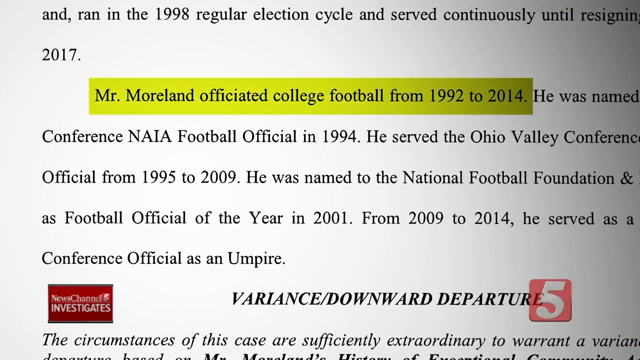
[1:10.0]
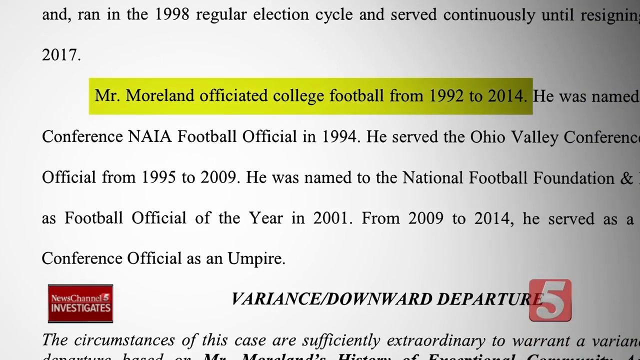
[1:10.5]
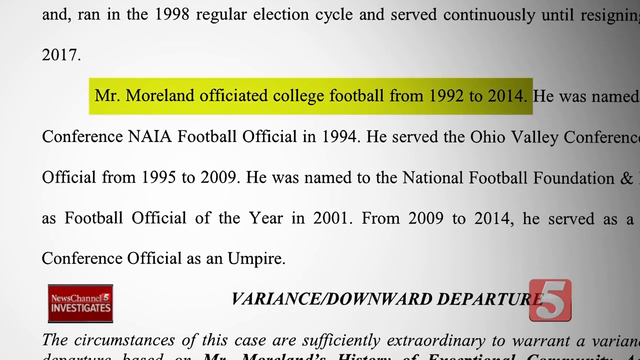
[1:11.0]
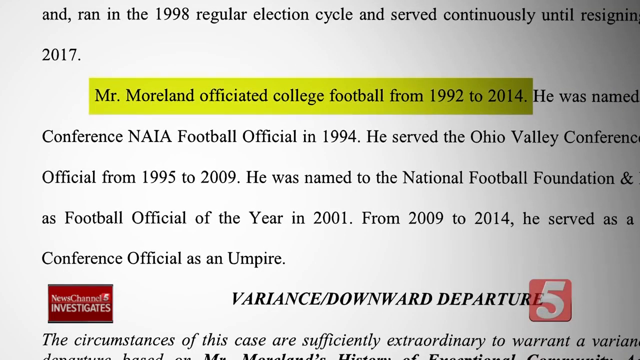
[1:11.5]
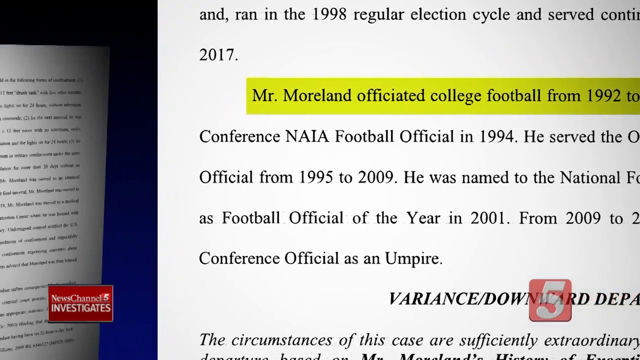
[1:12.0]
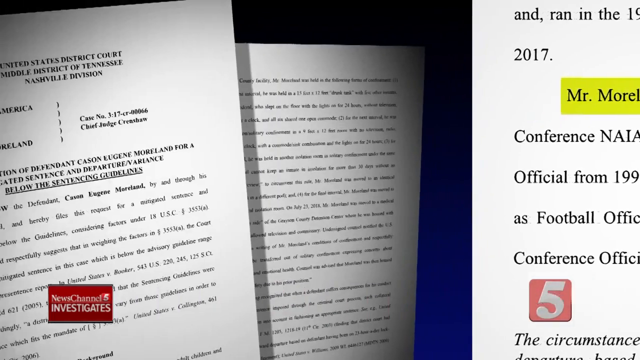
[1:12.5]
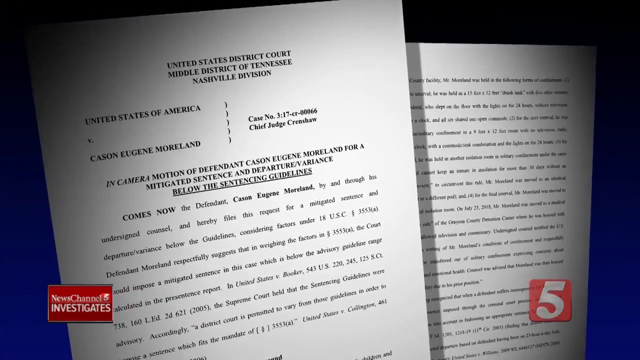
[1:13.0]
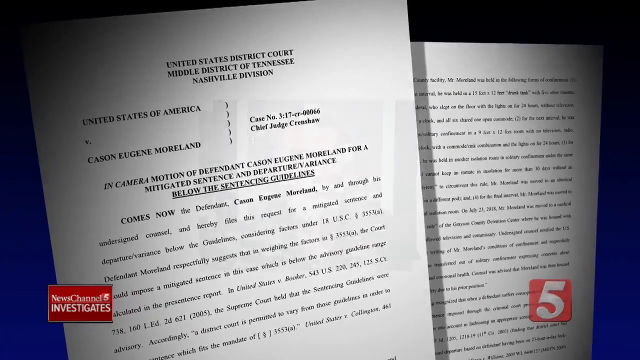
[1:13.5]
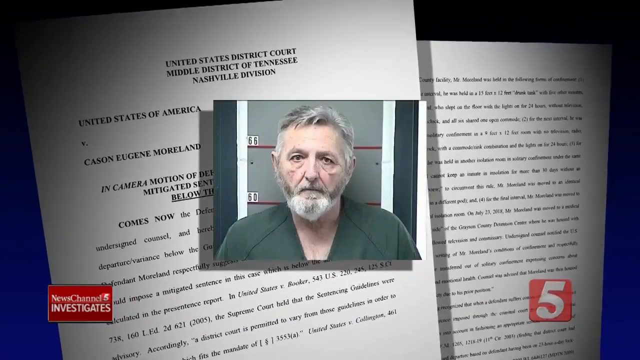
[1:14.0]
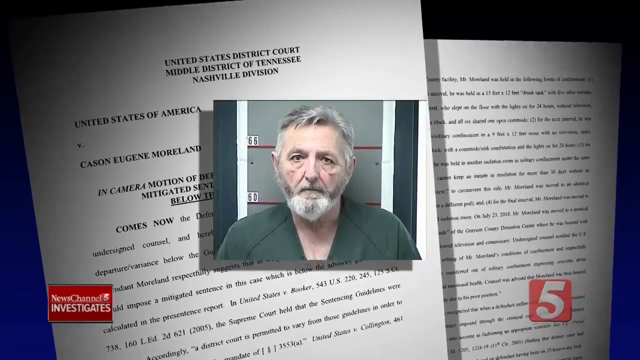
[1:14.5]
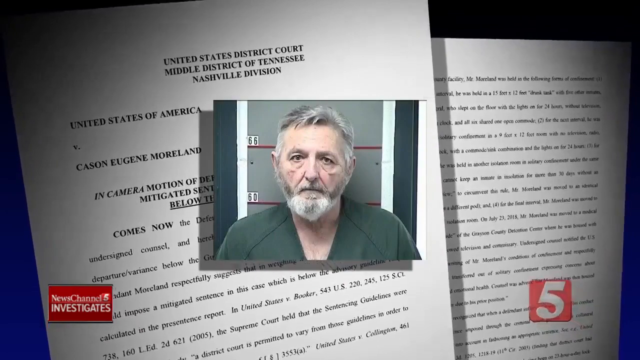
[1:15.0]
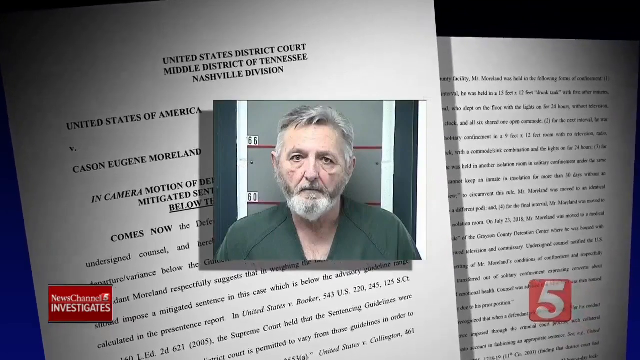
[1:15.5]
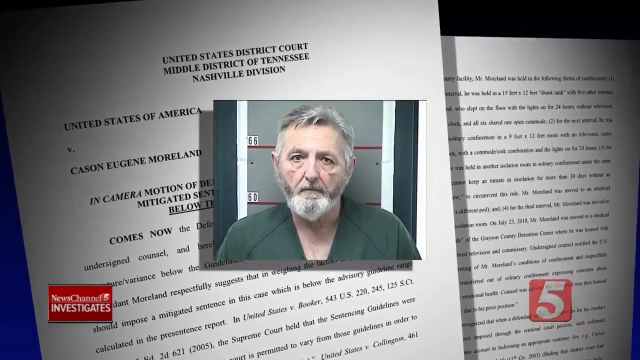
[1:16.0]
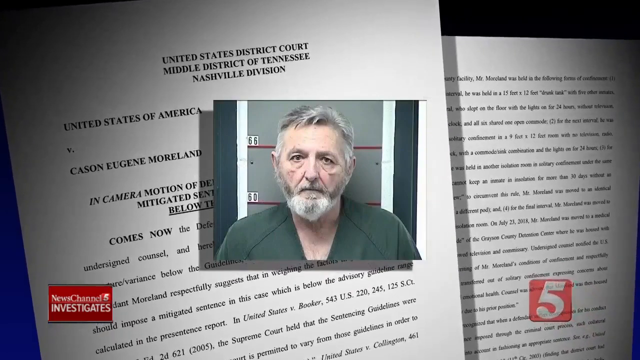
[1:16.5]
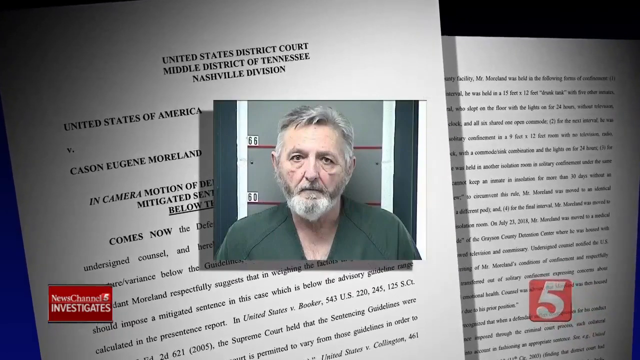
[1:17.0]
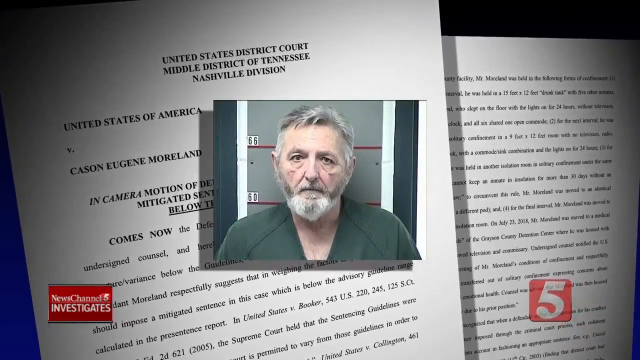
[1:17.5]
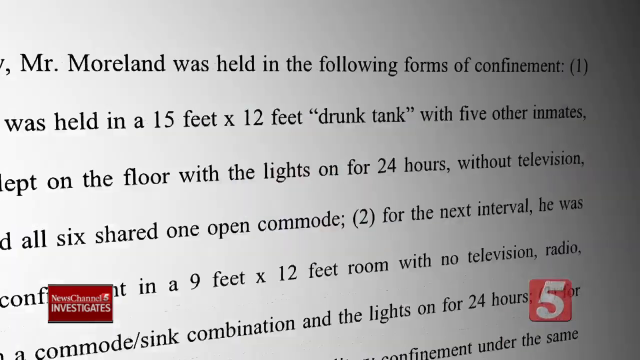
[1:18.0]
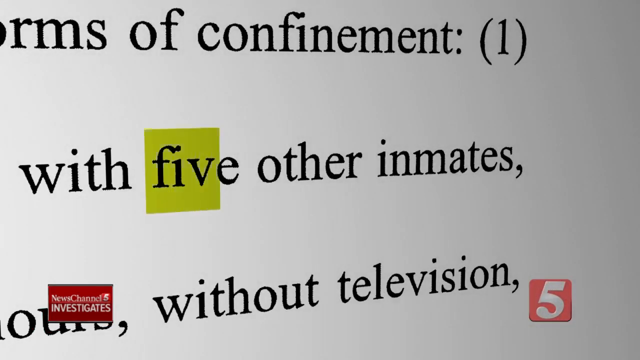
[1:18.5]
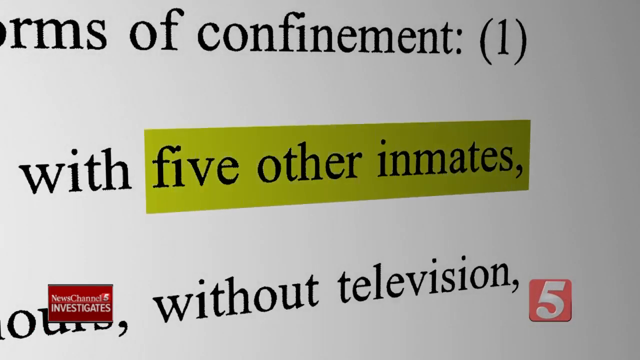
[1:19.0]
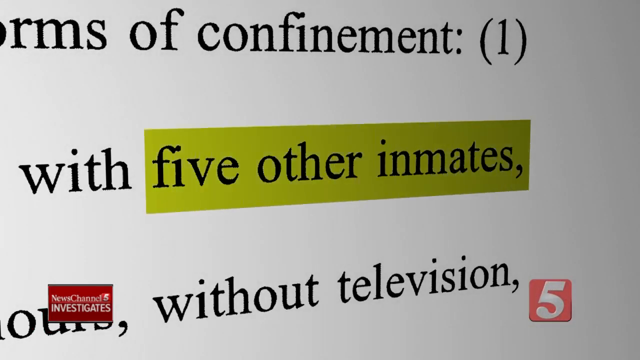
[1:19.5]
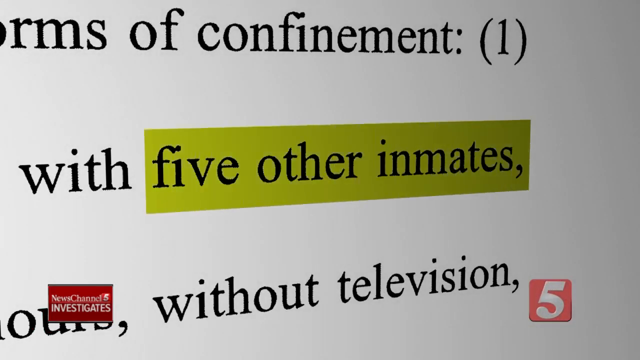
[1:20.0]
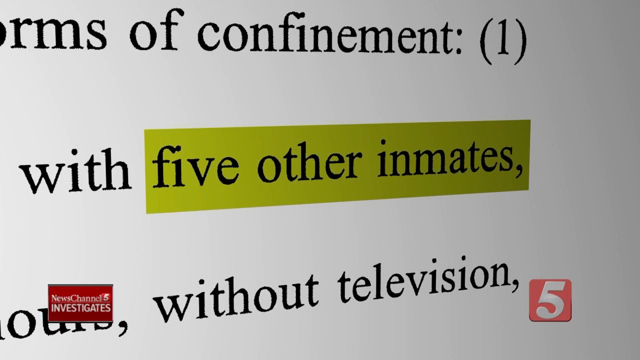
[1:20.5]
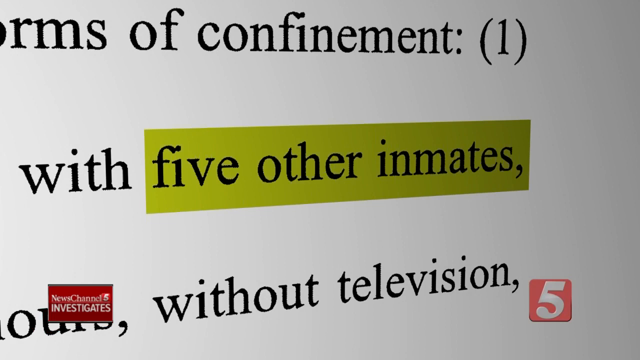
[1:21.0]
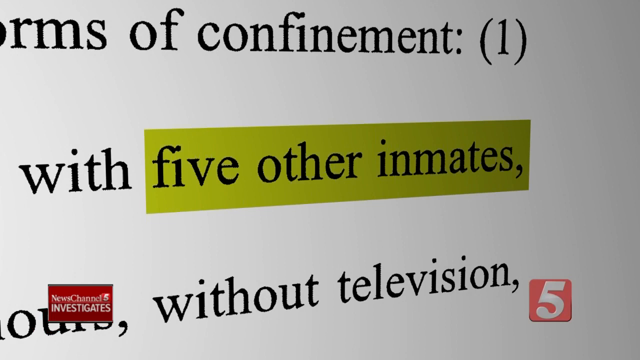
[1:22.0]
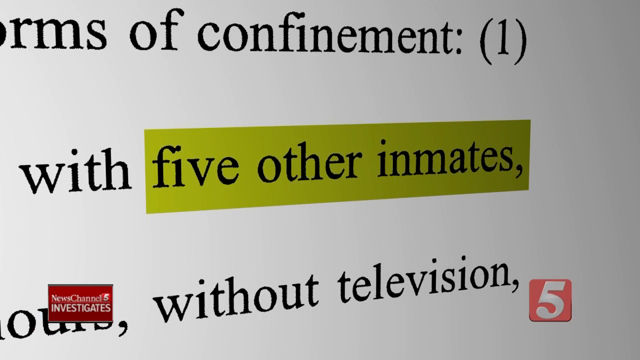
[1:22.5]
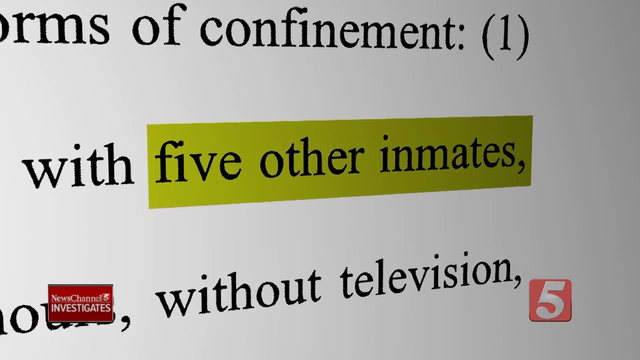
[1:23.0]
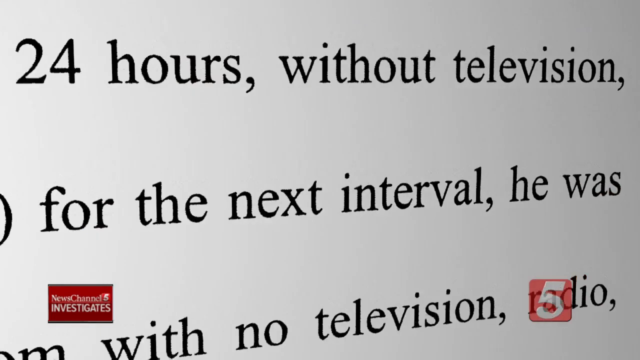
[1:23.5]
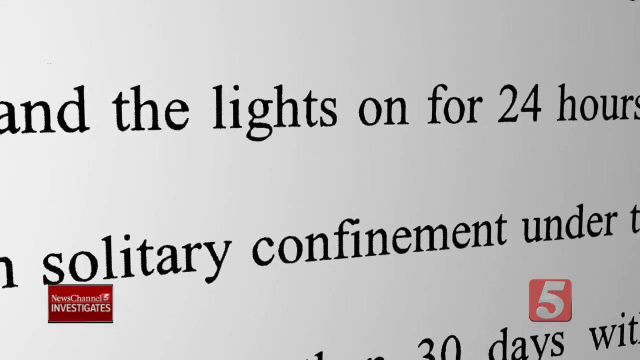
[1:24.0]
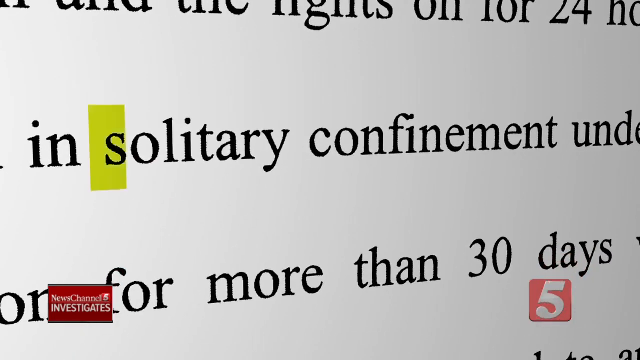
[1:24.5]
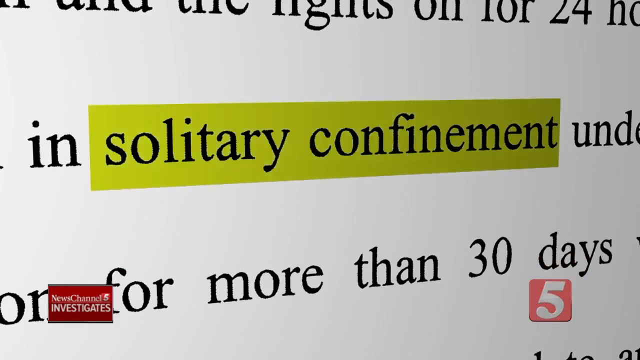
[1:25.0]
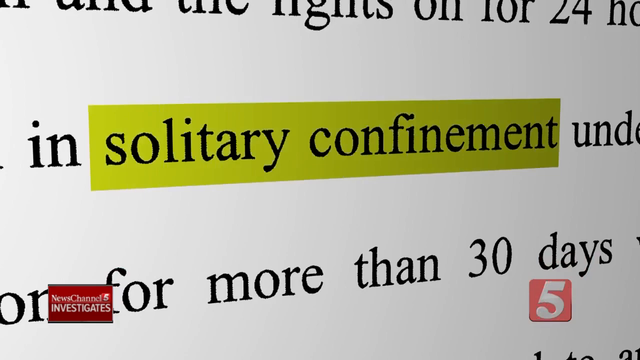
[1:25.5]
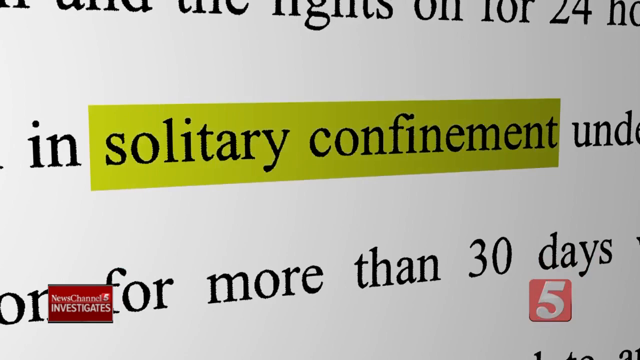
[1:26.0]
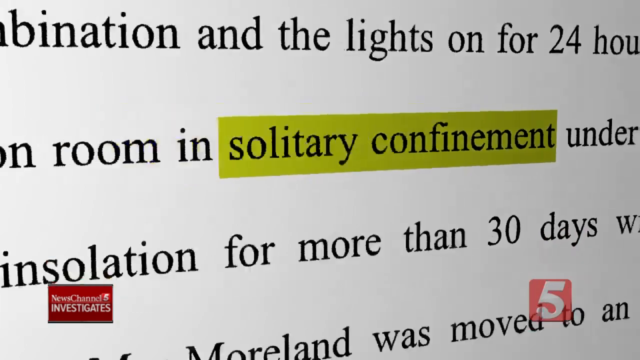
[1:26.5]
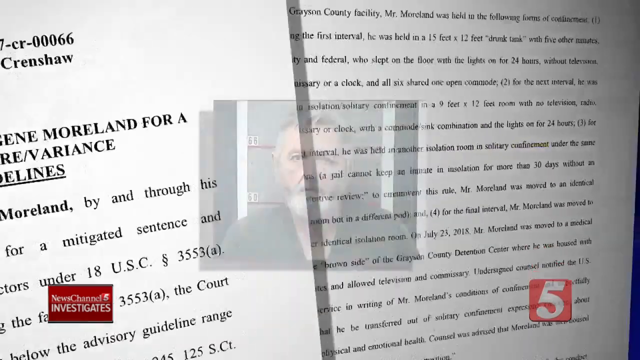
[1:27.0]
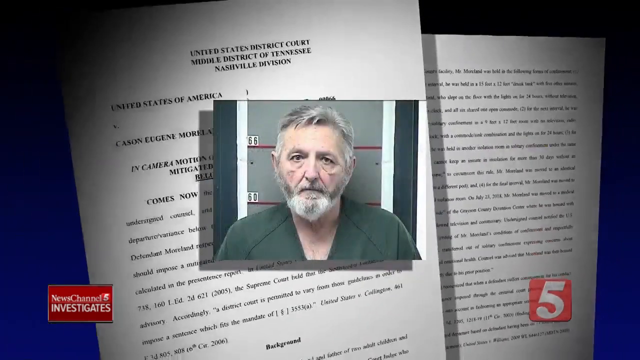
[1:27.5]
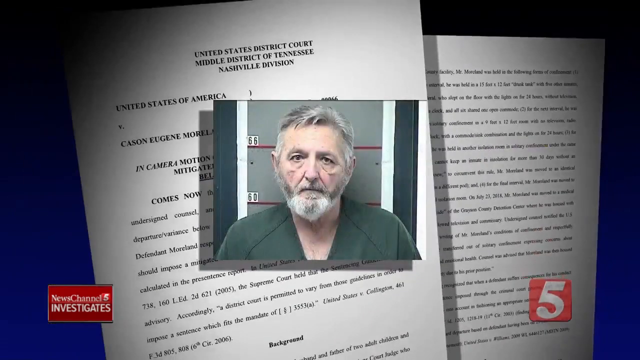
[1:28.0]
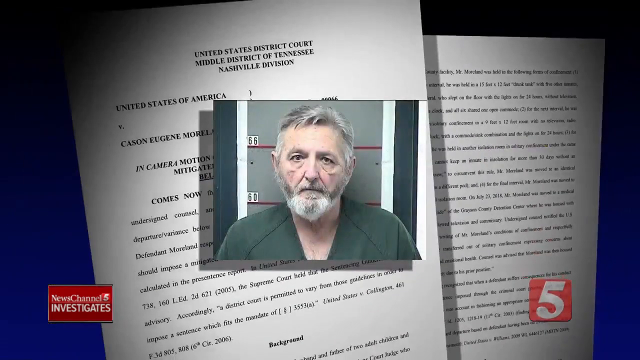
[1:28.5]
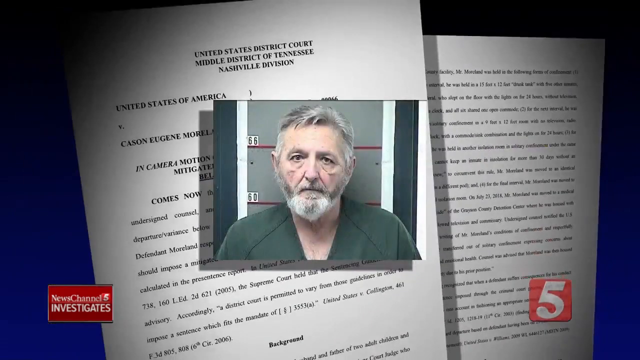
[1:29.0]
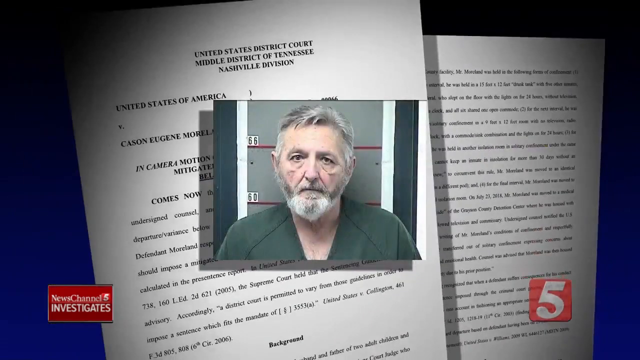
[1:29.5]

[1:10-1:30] The official court documents continue, returning to the first page, where a small picture in the center shows the judge with a full beard and gray hair in the green jumpsuit, against a gray wall with red lines. This appears to be his jail mugshot. He lines up between the height lines of 6.0 and 6.5; his ears hit the 6.5 line and his head goes approximately two inches above the red line, which would suggest an approximate height of 6.7. The camera focuses on a portion of the document where the words "five other inmates" are highlighted, then moves down to the highlighted words "solitary confinement". The camera then pans back and shows the mugshot of the judge once again.